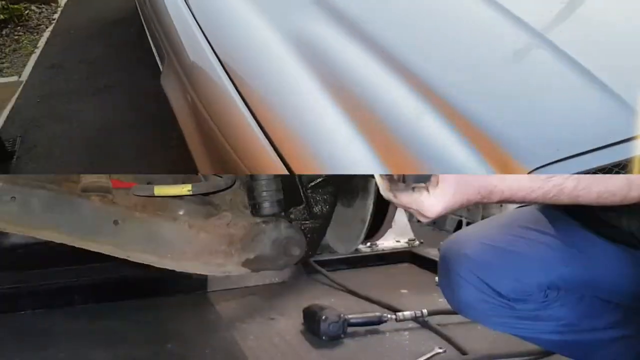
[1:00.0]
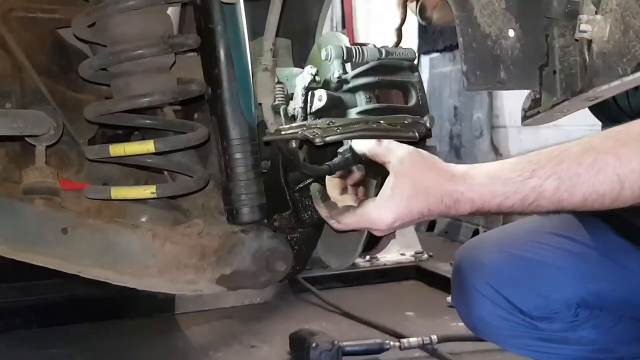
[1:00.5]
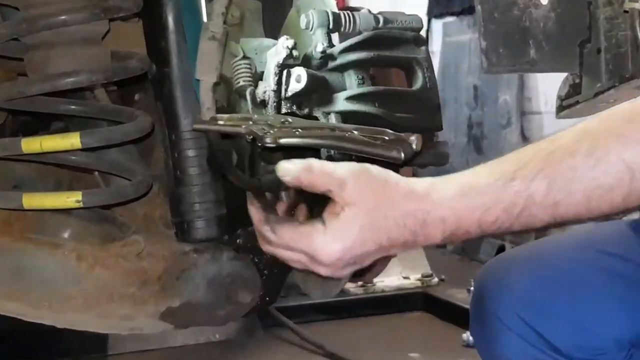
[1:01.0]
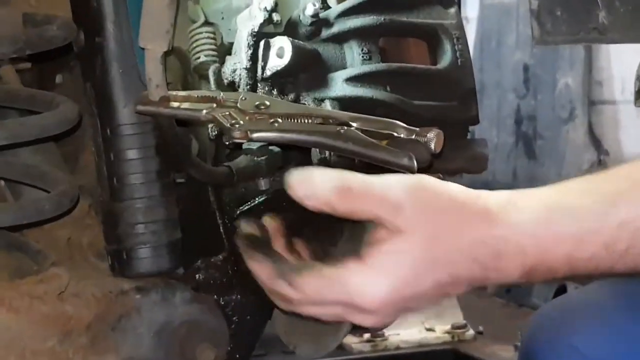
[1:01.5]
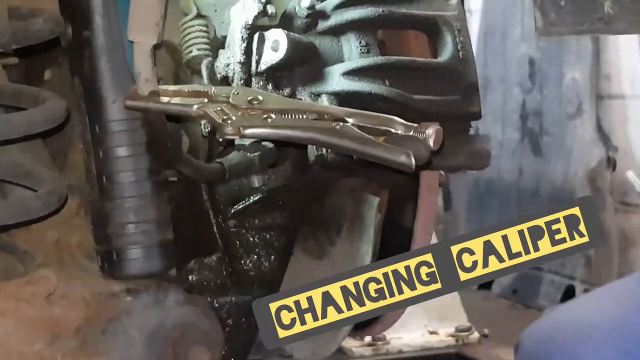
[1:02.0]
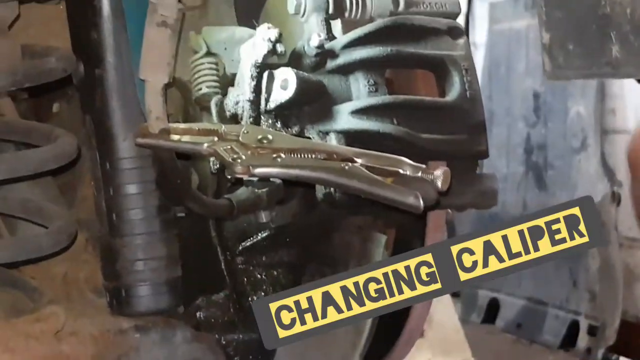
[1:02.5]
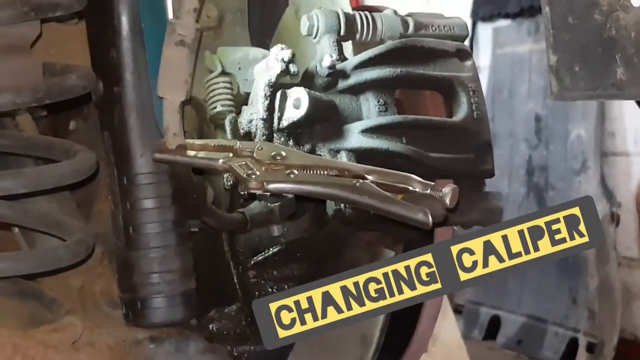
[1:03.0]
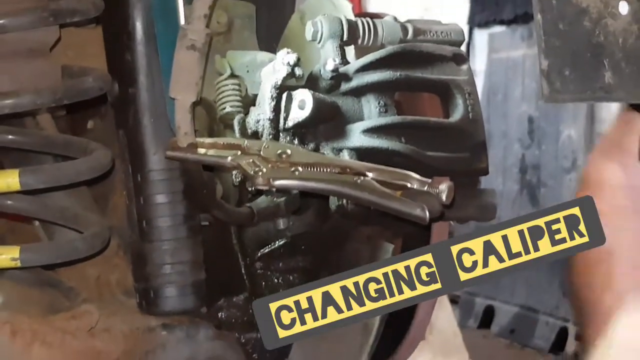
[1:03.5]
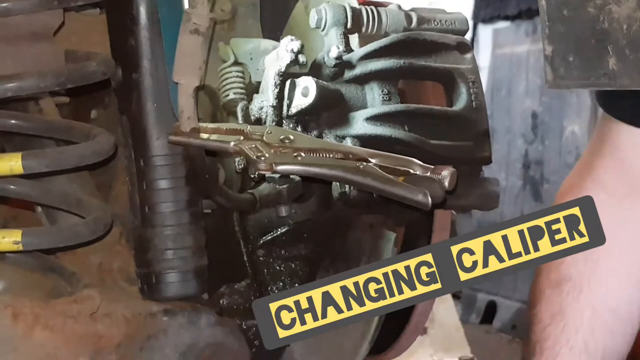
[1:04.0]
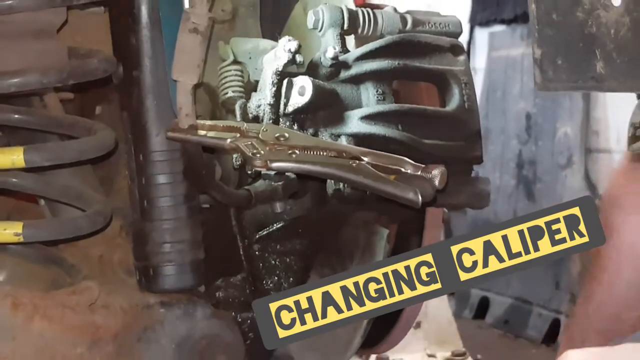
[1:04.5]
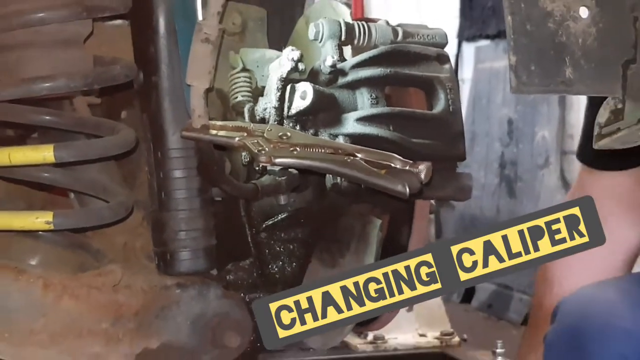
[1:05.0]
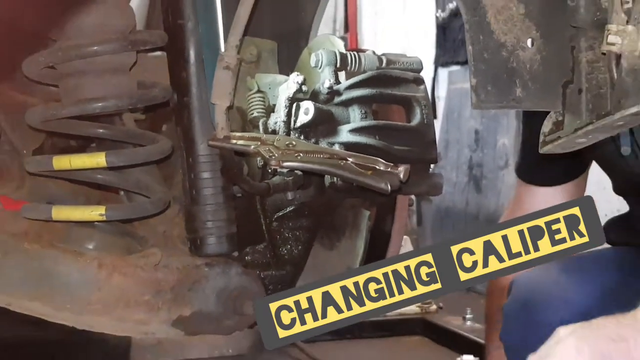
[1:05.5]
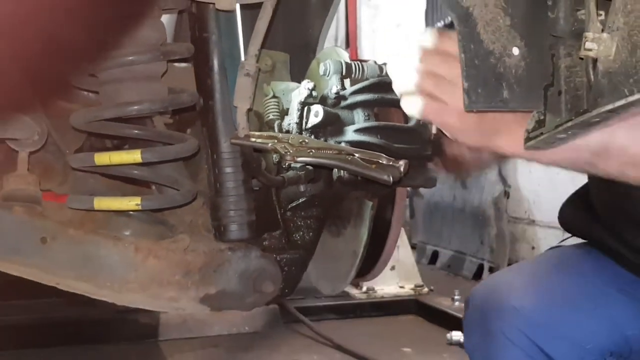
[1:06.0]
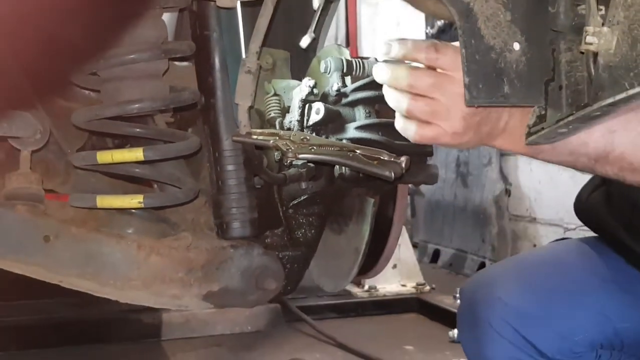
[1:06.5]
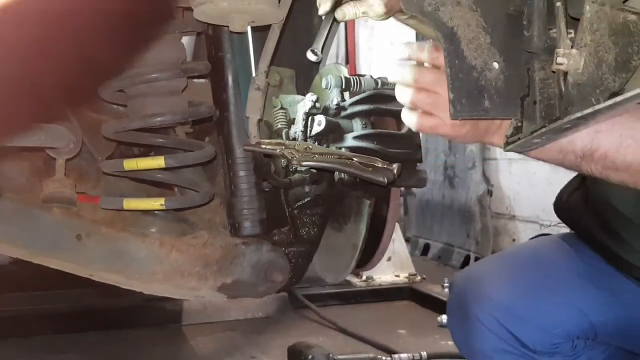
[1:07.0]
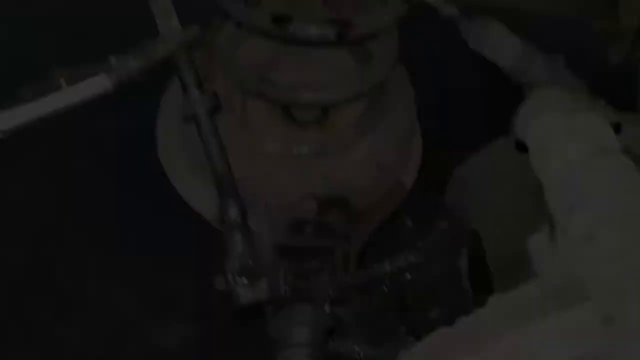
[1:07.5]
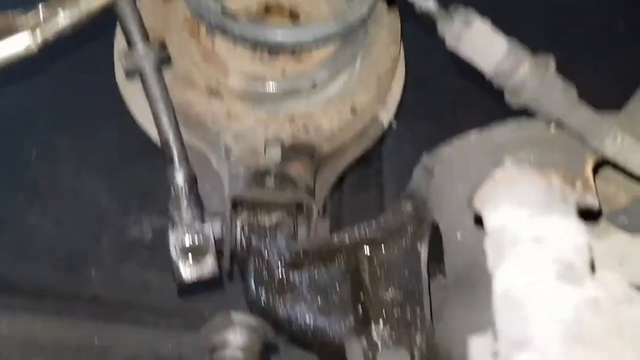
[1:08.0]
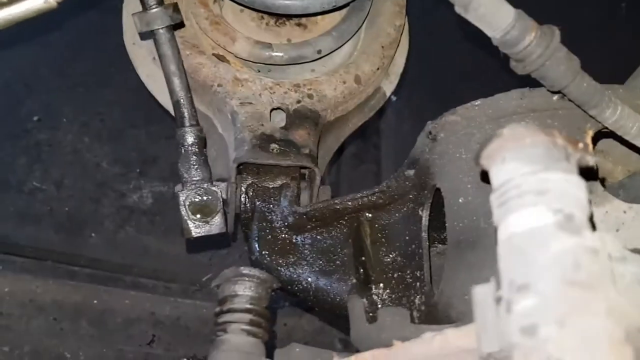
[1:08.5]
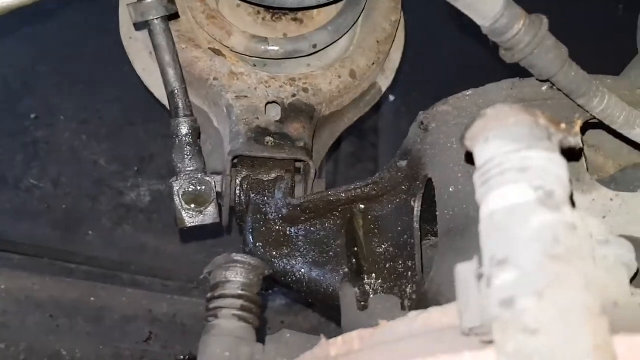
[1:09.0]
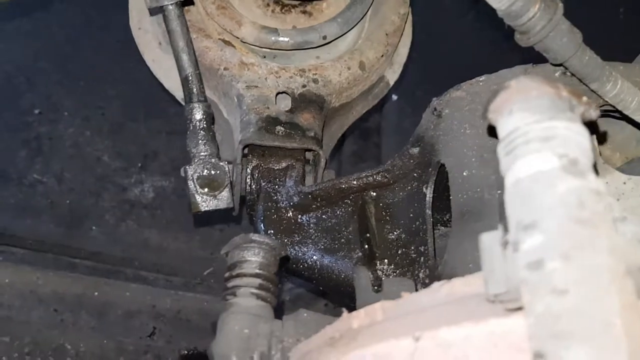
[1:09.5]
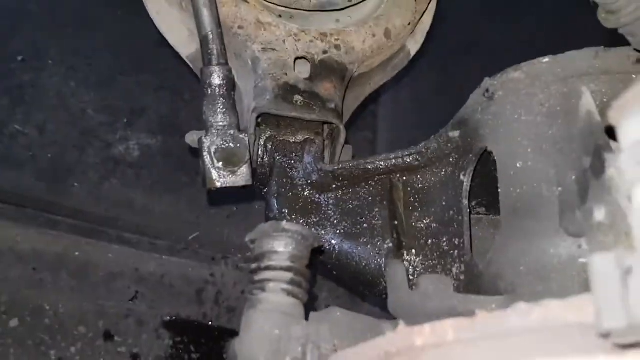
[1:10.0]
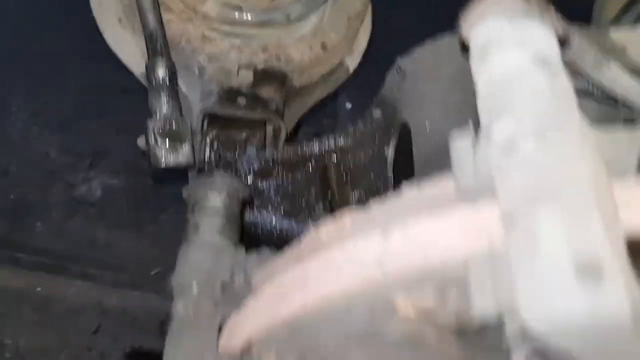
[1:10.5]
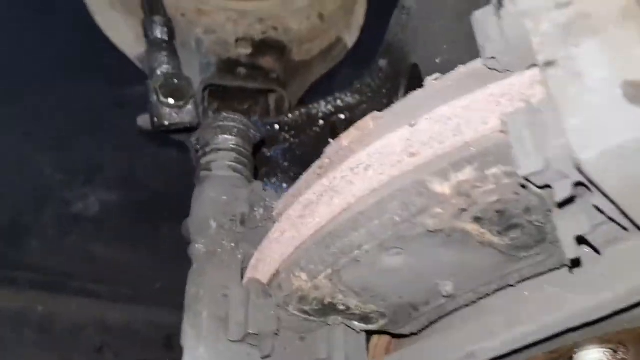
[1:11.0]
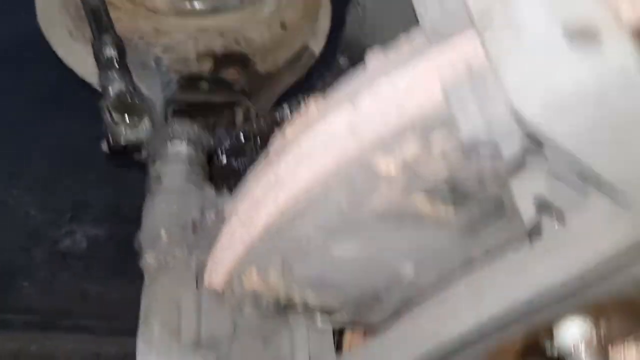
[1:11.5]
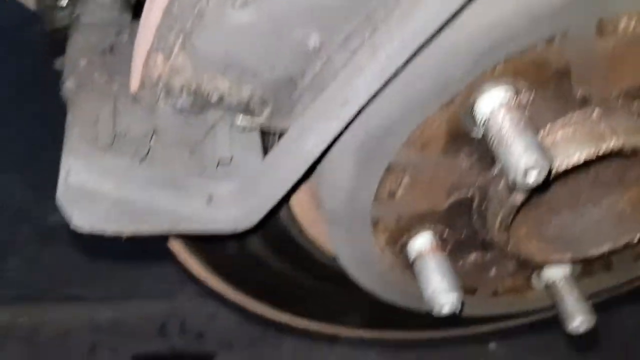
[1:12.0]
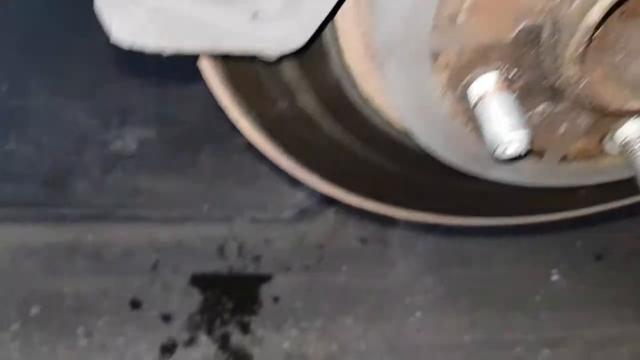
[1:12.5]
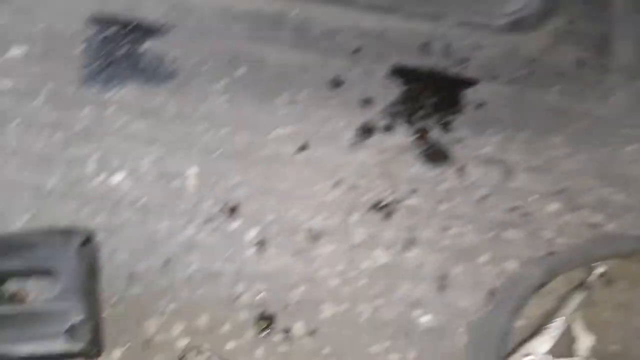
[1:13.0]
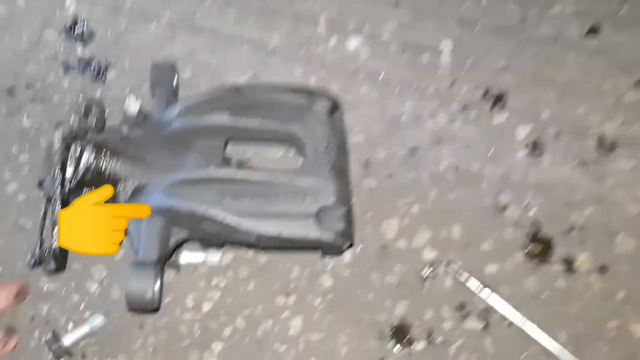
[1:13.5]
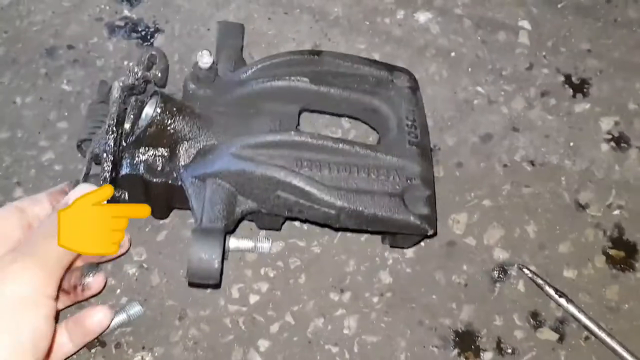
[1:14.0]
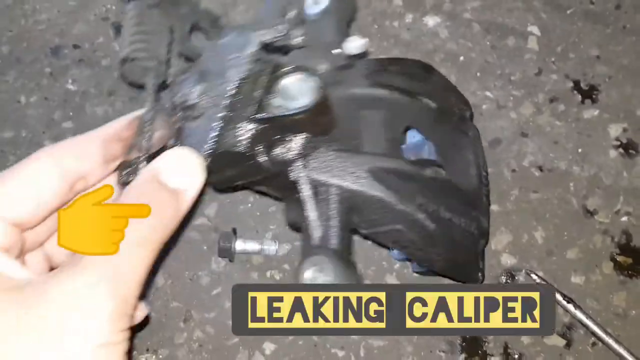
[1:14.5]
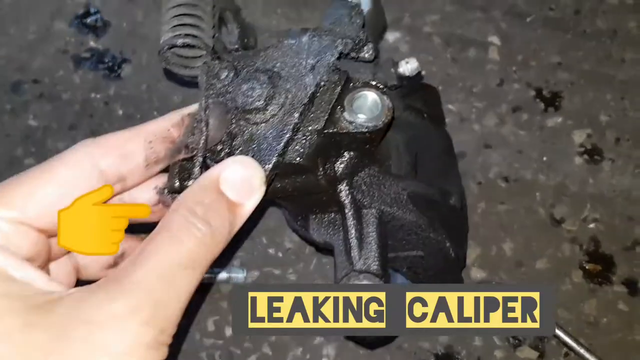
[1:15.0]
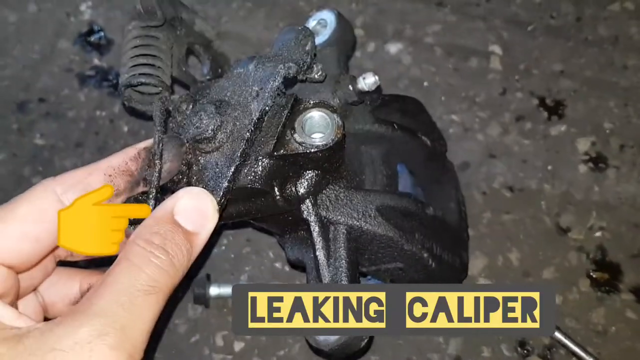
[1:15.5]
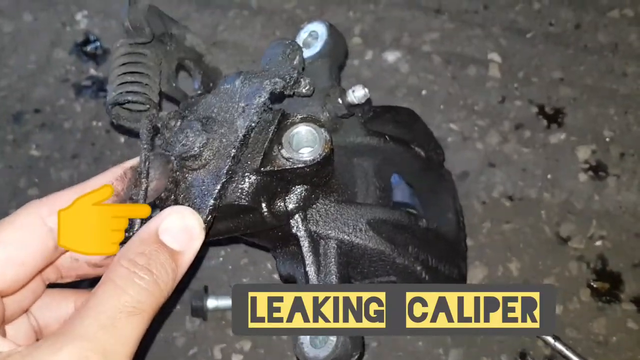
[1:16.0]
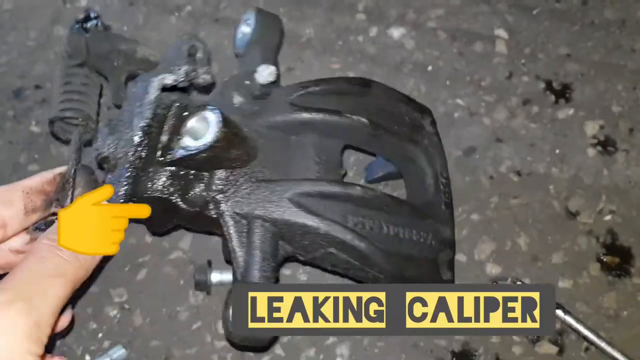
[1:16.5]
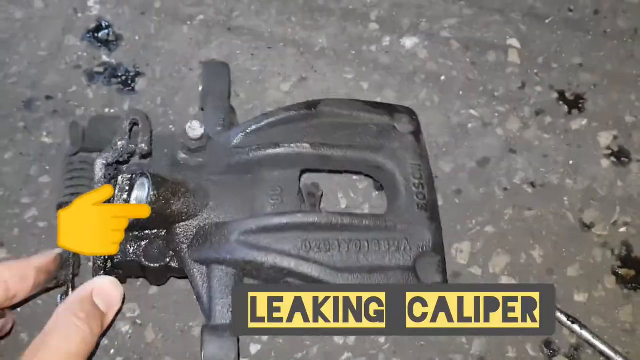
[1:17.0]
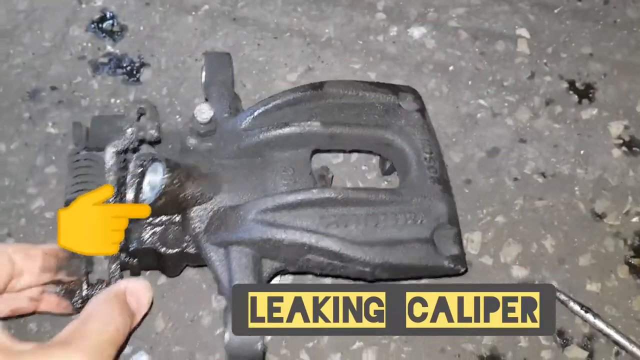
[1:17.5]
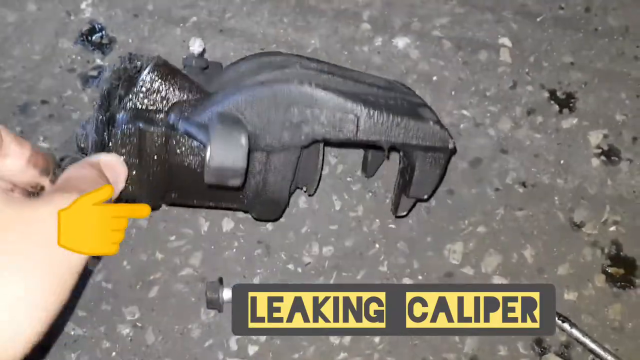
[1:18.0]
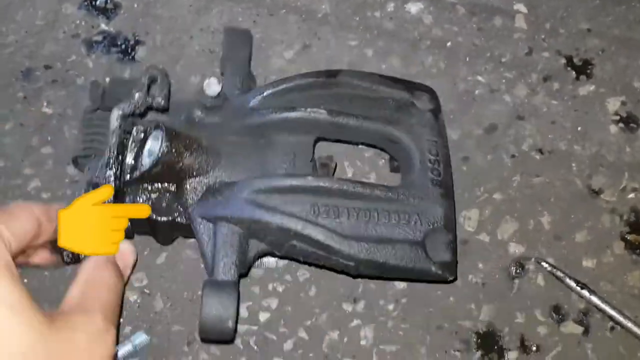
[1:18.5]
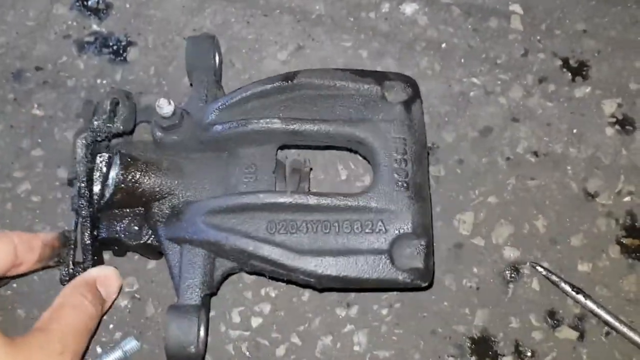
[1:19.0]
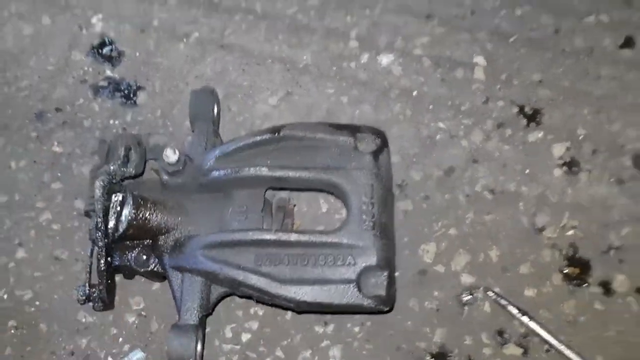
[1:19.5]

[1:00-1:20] The underside of a car is shown, and the person's left hand comes up and grabs the area where the tire is sitting; the tire appears to have been taken off. The camera zooms in, and the words "changing caliper" appear inside a gray box at the bottom right of the screen, which has two rectangular yellow boxes inside it. The camera zooms in and out a little on the suspension area, showing a set of needle-nose pliers holding some hoses for the brake fluid. The camera slowly zooms out, and the scene changes to a brake part with some hoses coming from it. The camera zooms down to the floor, where another part is laying. The cameraman's hand comes up, grabs the part and lifts it, and the words "leak in caliper" appear at the bottom right of the screen. An animated rightward-pointing hand appears on the left side of the screen, pointing at the part. The person moves the part around as the camera slowly zooms out.